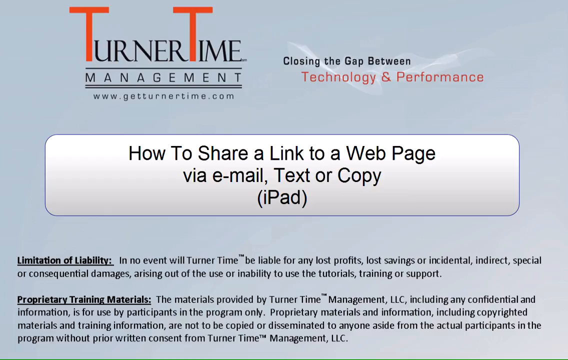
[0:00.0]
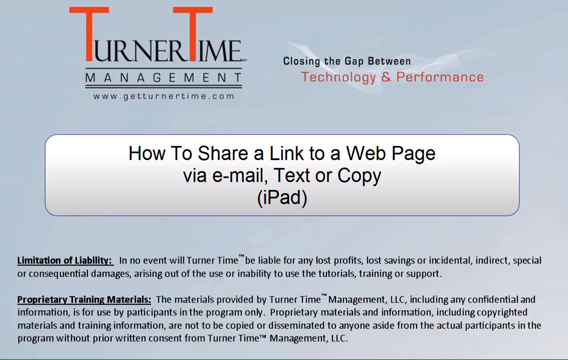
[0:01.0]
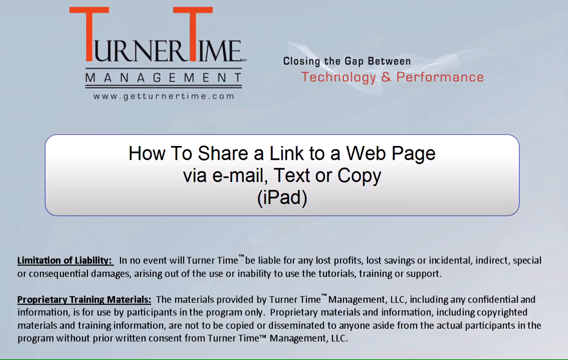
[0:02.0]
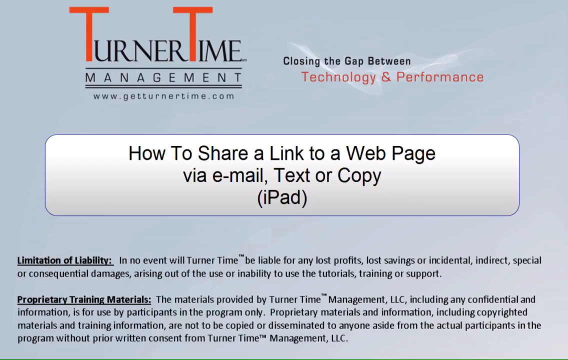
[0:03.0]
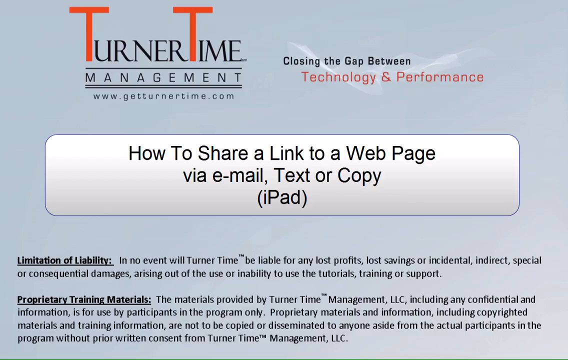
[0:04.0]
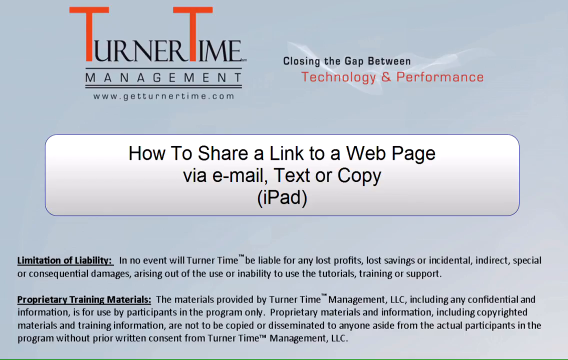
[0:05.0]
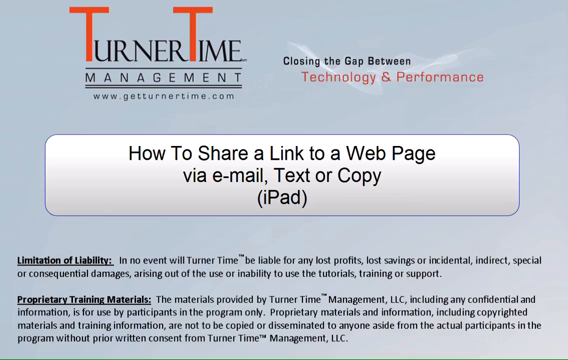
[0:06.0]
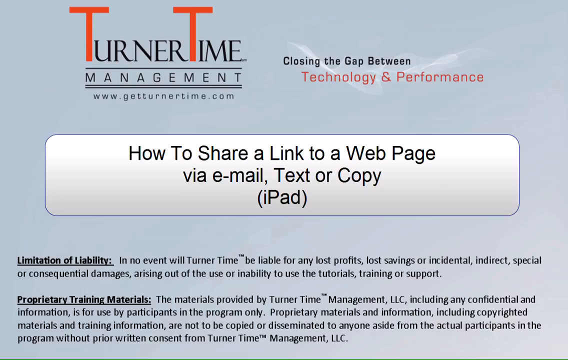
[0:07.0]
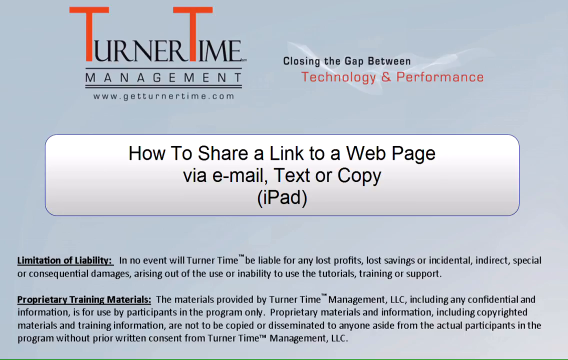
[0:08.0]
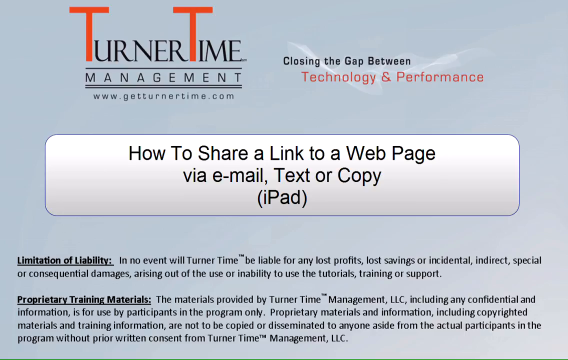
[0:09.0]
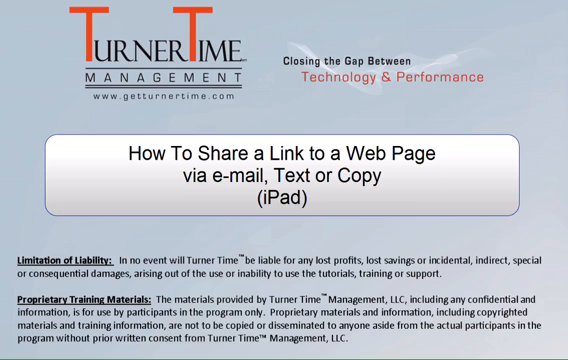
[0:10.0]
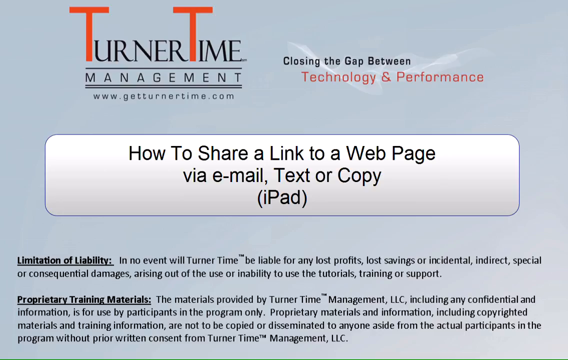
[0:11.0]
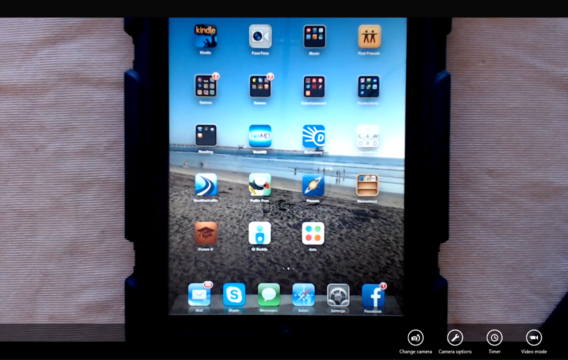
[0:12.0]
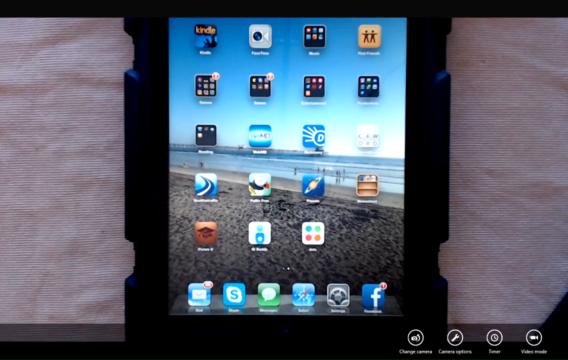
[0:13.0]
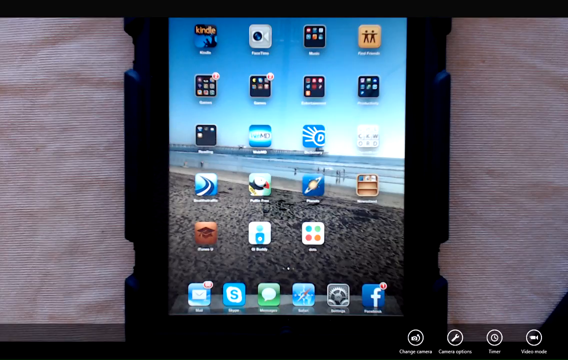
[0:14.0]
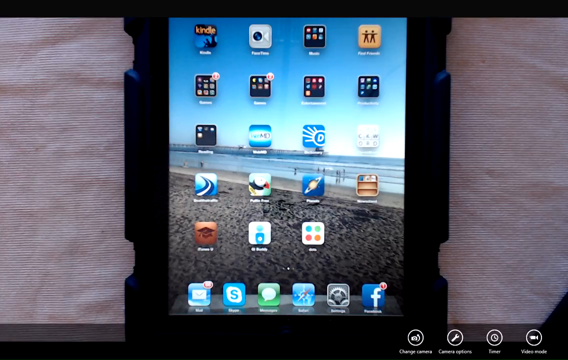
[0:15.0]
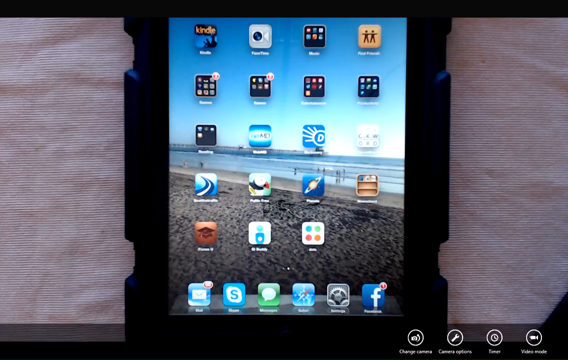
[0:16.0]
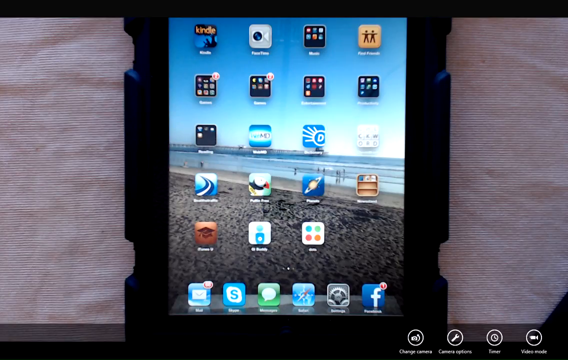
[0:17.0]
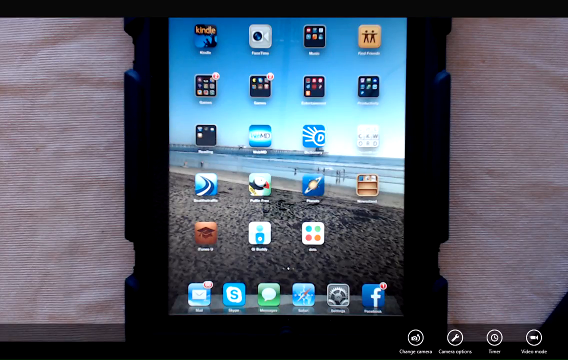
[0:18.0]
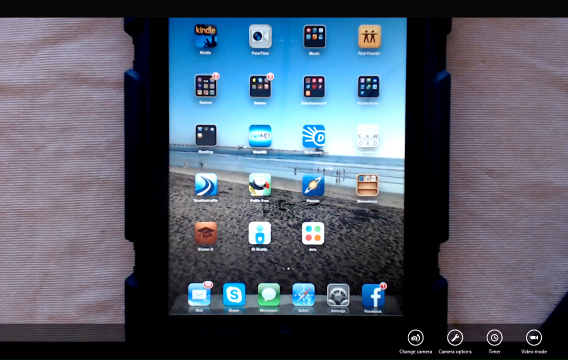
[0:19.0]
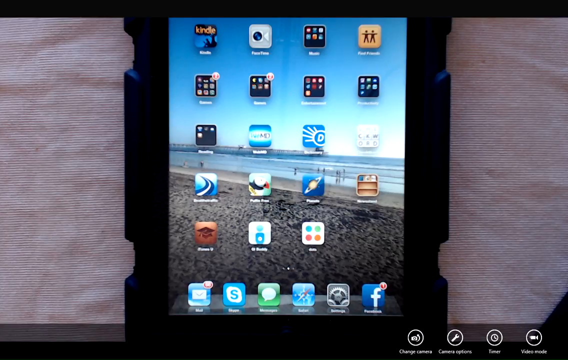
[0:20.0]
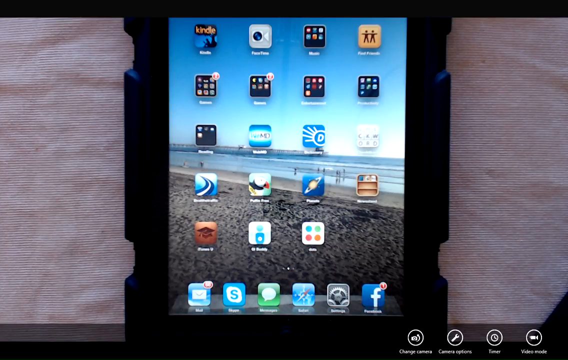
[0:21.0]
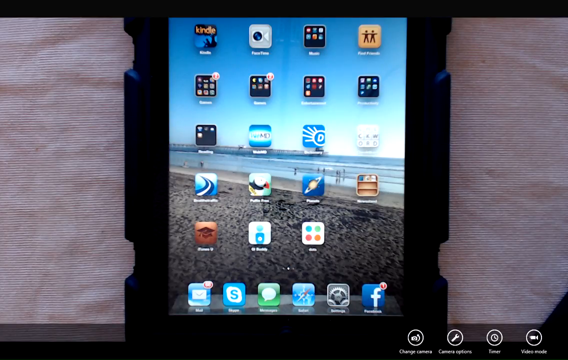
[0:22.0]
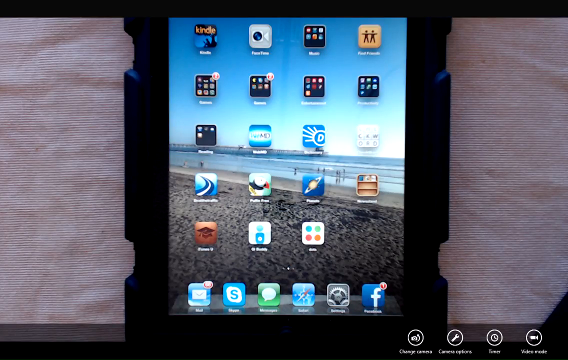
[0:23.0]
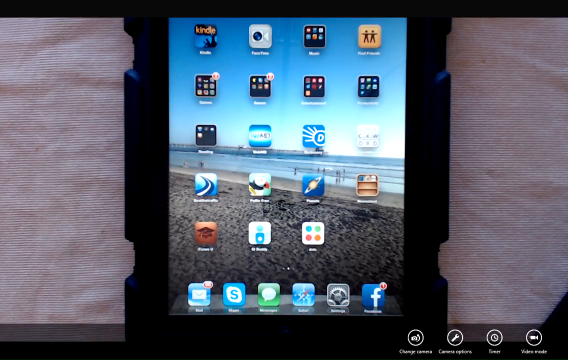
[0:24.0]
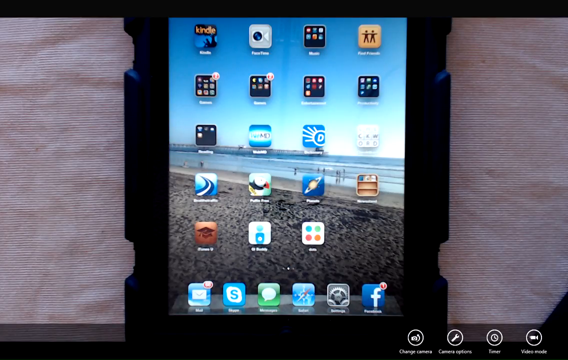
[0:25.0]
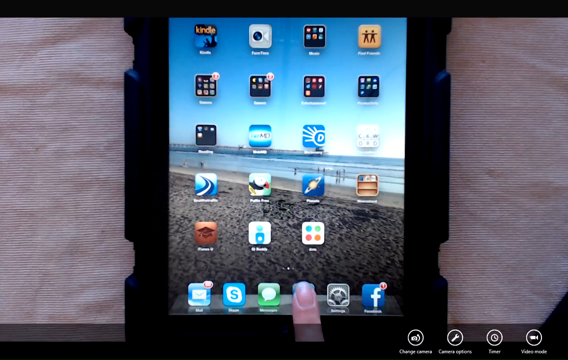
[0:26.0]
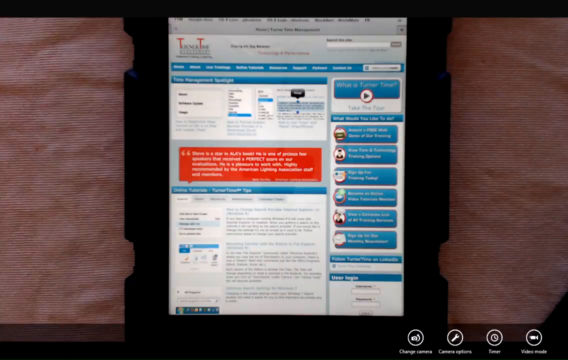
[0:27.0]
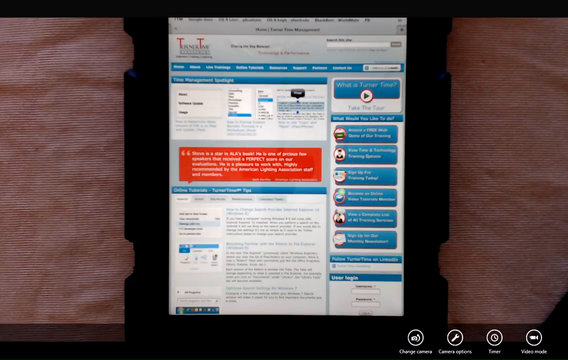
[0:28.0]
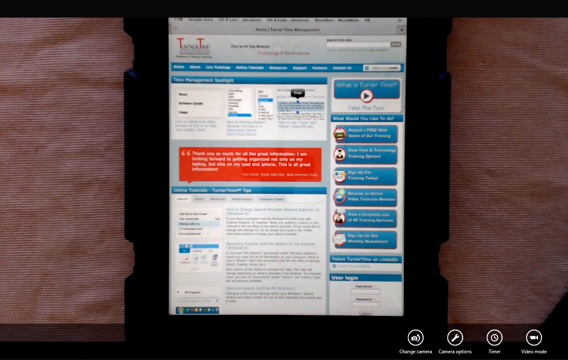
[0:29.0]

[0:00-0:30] Against a bluish gray background, the top left corner reads "Turner Time Management," with both T's as large red T's and the rest of the text in black. More text on the screen covers limitation of liability and proprietary training materials. In the center is a light gray button or chat bubble with black text reading "how to share a link to a webpage via email, text, or copy iPad." The video stays on this screen, then after several seconds transitions to a shot of an iPad or tablet laying down on a cloth surface. The device is on its home screen and is surrounded by a black hard plastic case that appears to be a protective case.